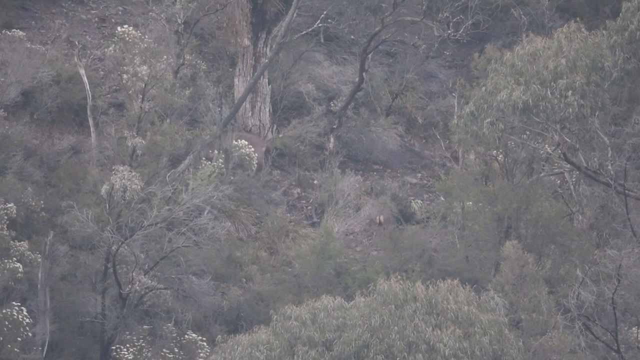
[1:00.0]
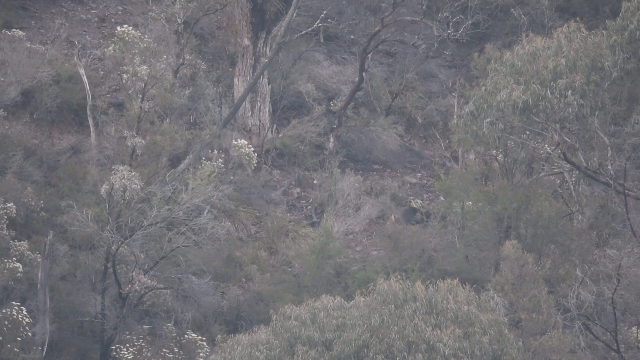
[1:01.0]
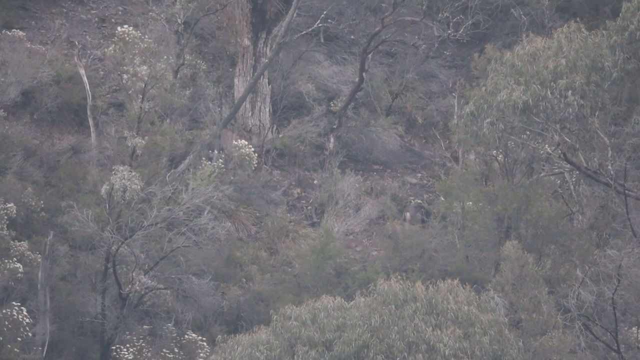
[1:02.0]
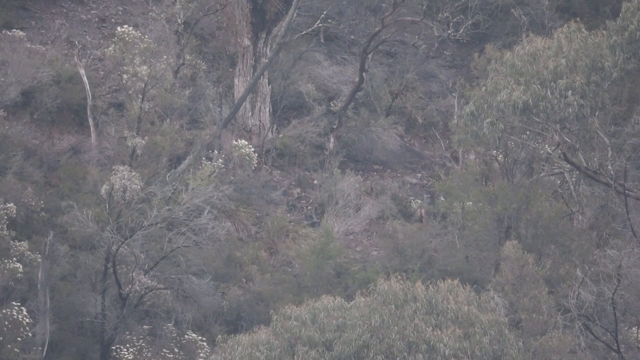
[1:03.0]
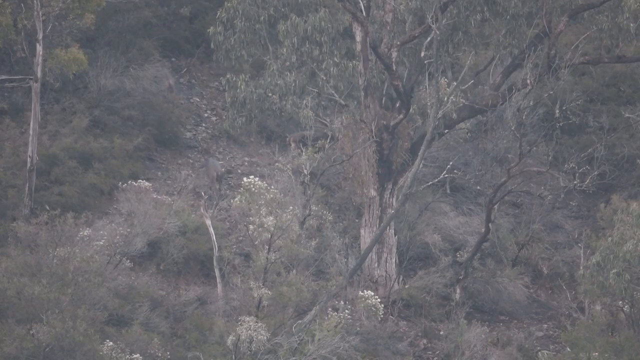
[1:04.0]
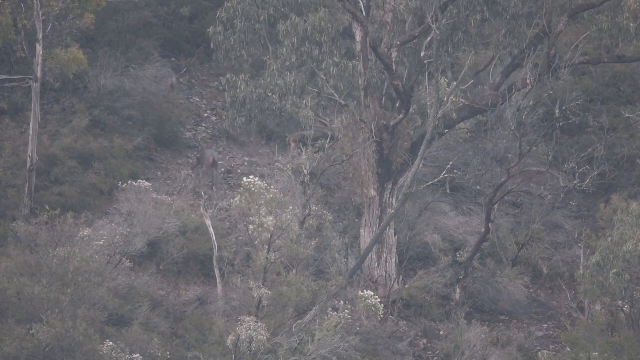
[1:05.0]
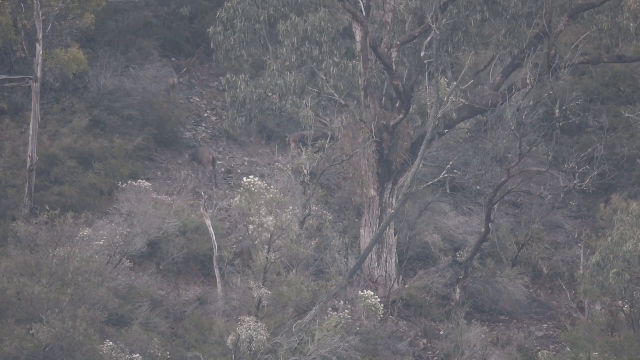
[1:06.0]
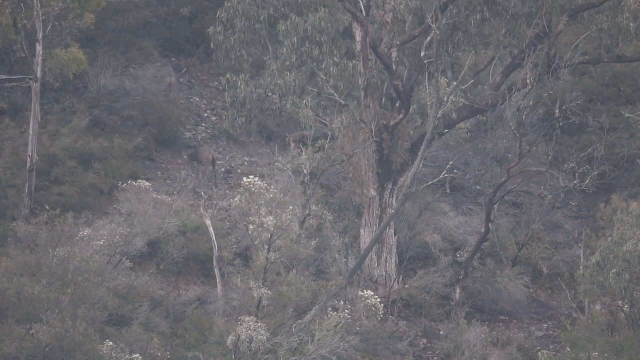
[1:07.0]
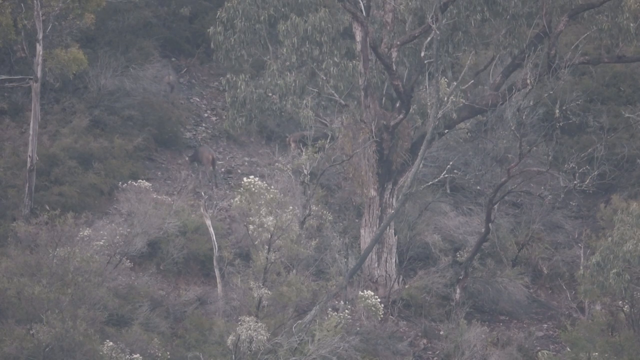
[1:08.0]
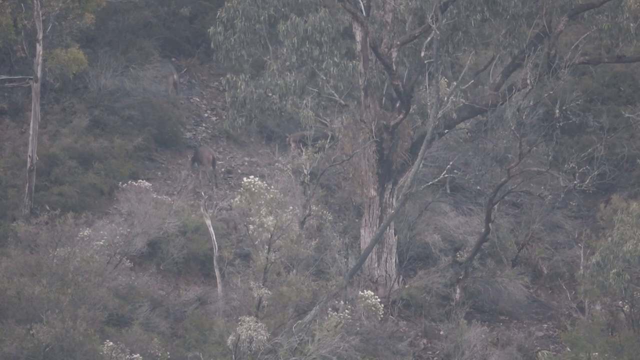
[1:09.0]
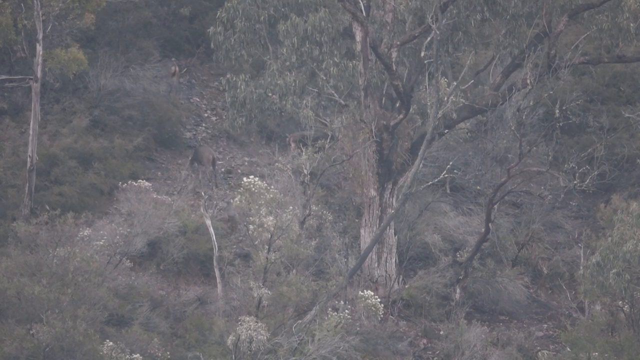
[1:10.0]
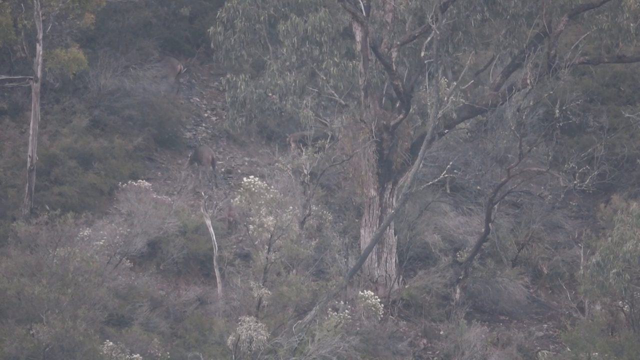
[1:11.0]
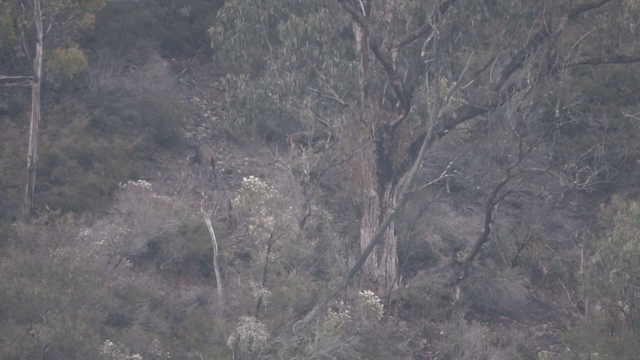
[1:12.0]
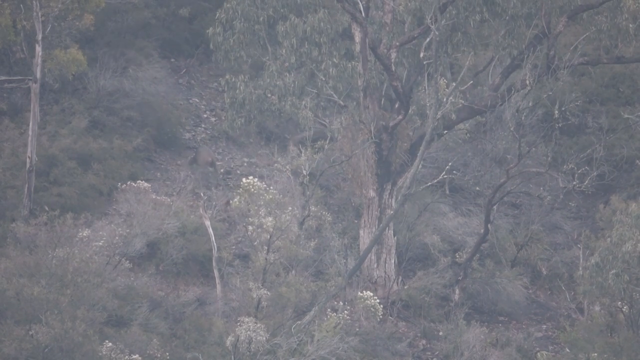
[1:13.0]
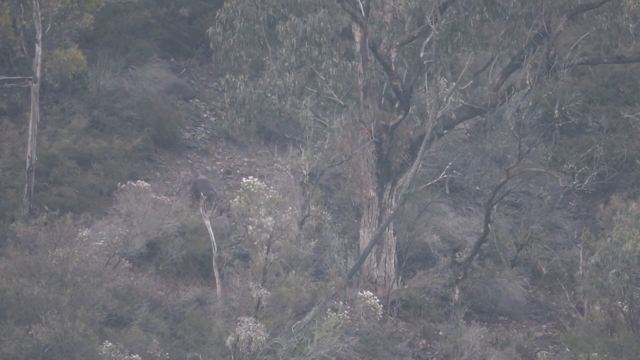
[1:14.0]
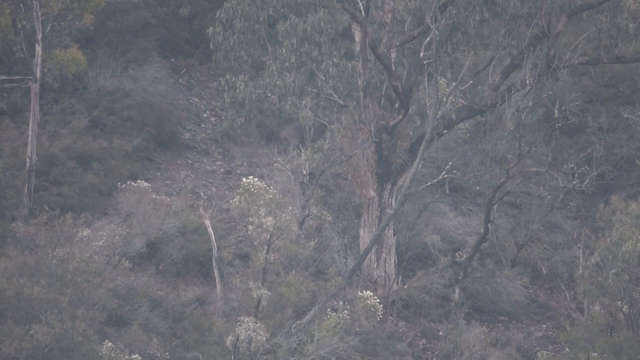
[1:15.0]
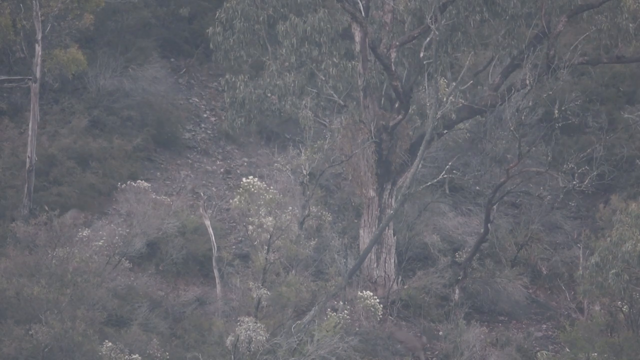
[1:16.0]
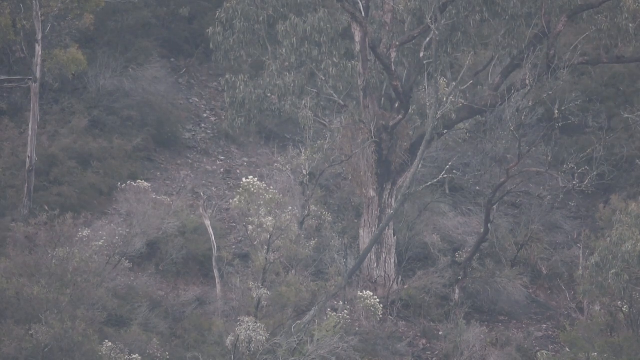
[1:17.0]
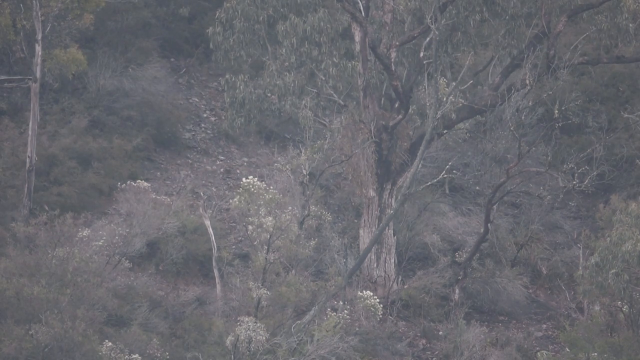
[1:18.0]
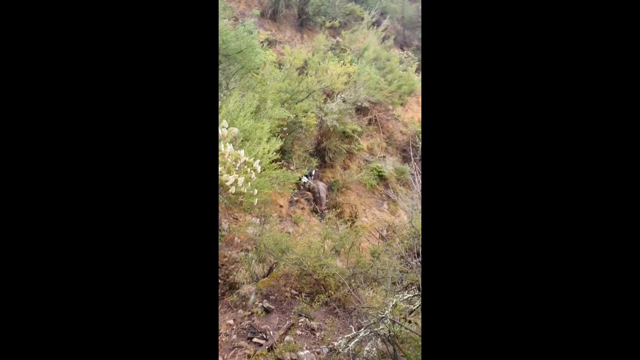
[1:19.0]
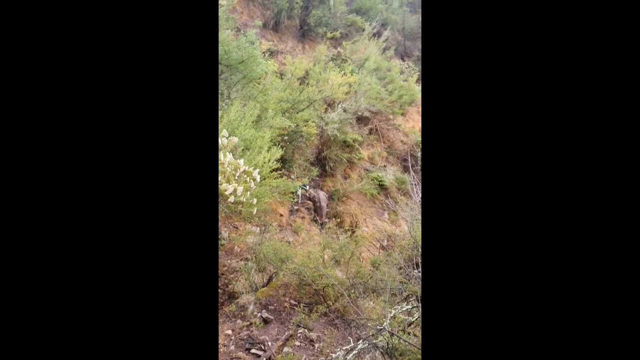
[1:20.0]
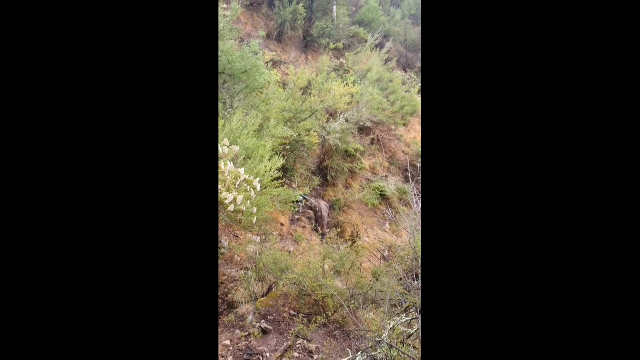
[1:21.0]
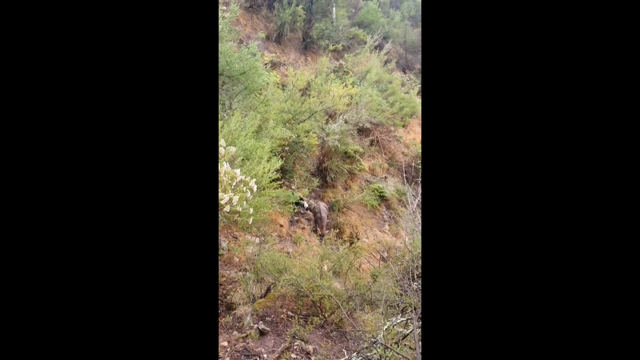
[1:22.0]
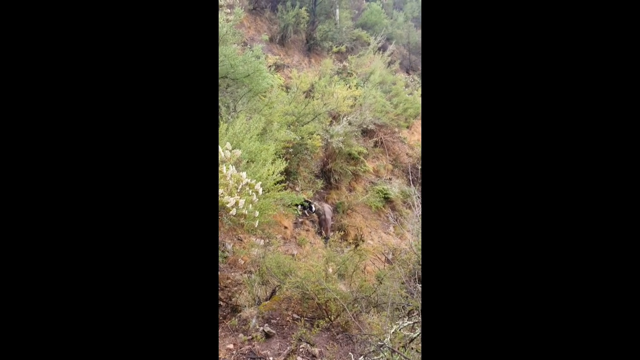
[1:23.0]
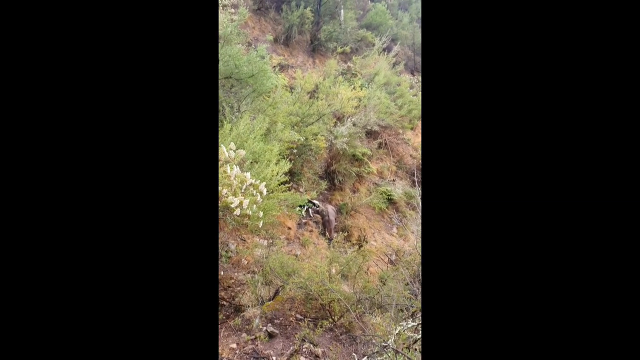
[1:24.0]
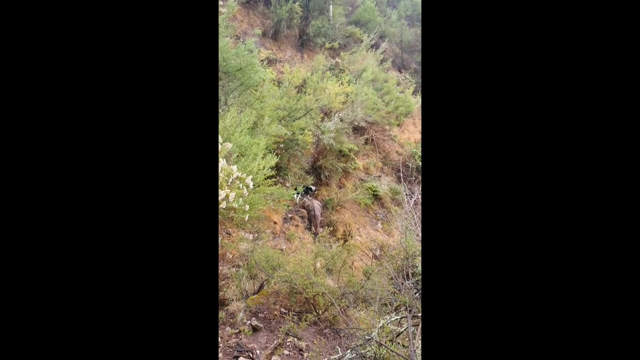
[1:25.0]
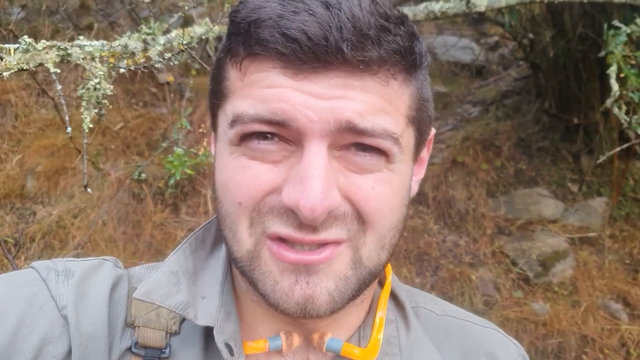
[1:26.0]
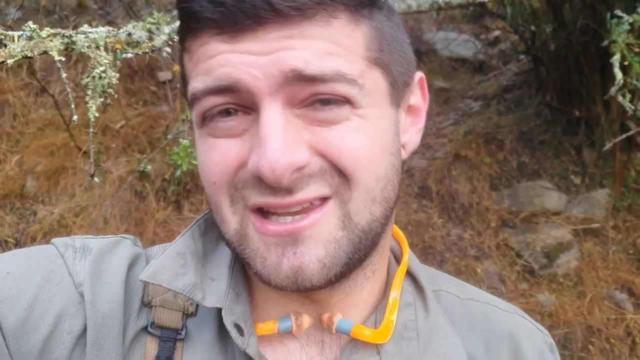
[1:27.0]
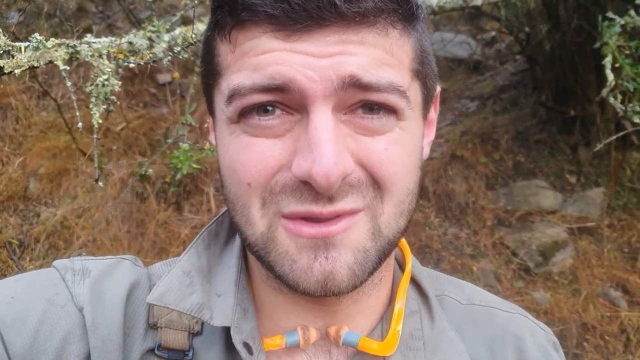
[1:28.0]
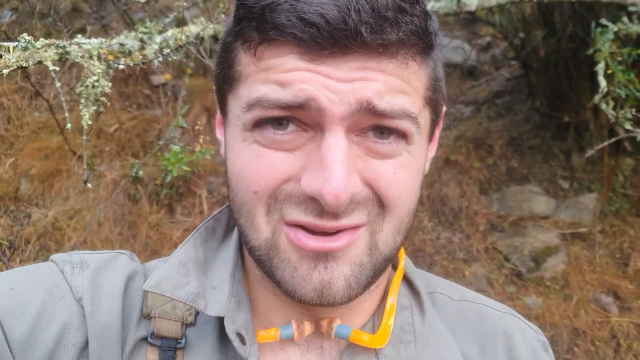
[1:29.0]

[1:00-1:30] The view looks down onto a wooded area with lots of trees, where a group of deer is walking on the ground below. Their hair or fur is the same colour as the soil, making it difficult to see exactly how many deer there are. In the centre of the picture is a dying tree with whitish bark at its base and a split where the tree is rotten. The deer walk to the left of that tree along a stony pathway; there are at least three deer in the group. A small animal that was hidden by one of the bushes, apparently not a deer, comes up behind one of the deer just up from the rotten tree, creeping slowly towards it; it is quite small compared to the deer, possibly a cat. The deer suddenly moves, and the other, bigger deer at the top runs back. It is hard to see exactly what happens or what type of animal is involved, but something is crawling behind the deer in the centre of the path, and it appears to run off back towards the bottom of the screen. The animals scatter in different directions until none are in sight. Next, an image from above shows a deer on the ground that may be dead or injured, with what might be a black and white dog looking at it. Then a man appears in close-up talking to the camera, slightly squinting his eyes.